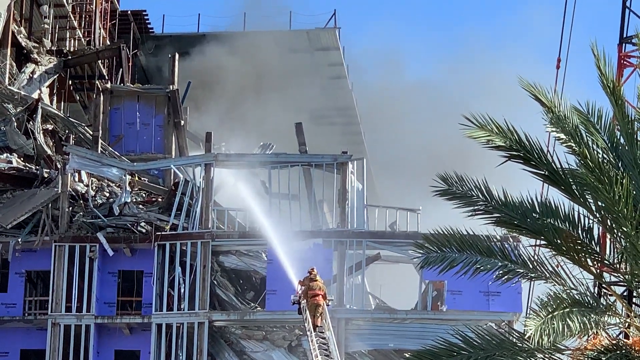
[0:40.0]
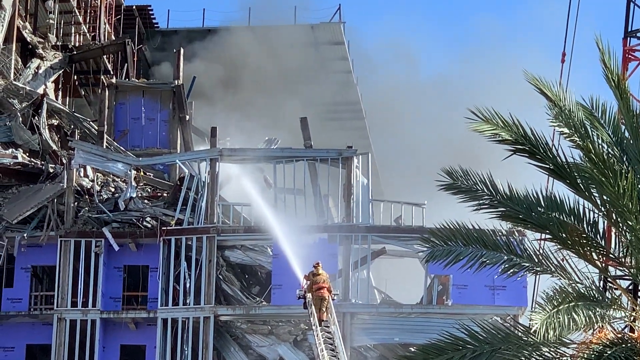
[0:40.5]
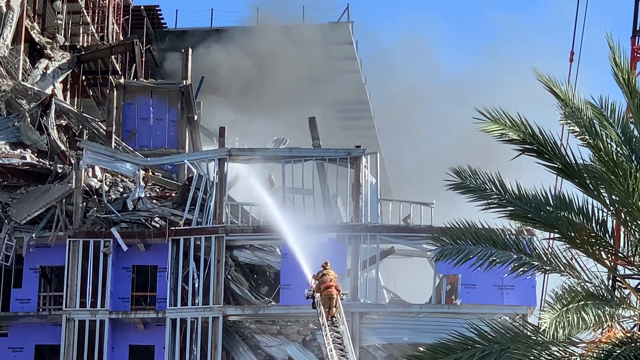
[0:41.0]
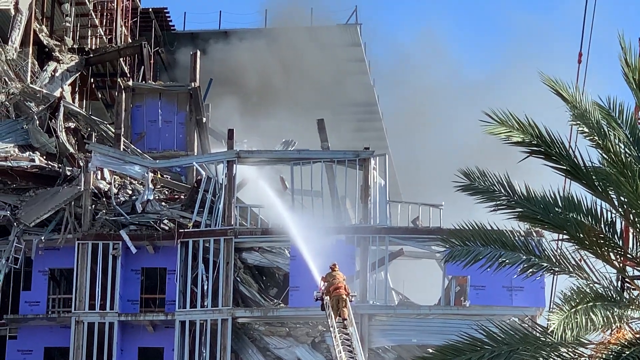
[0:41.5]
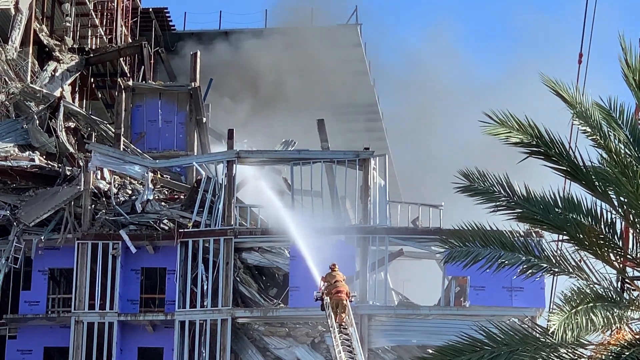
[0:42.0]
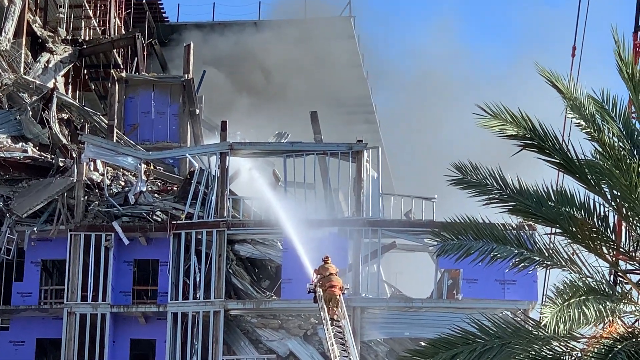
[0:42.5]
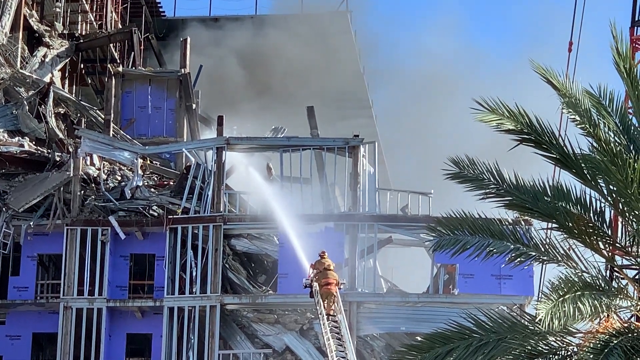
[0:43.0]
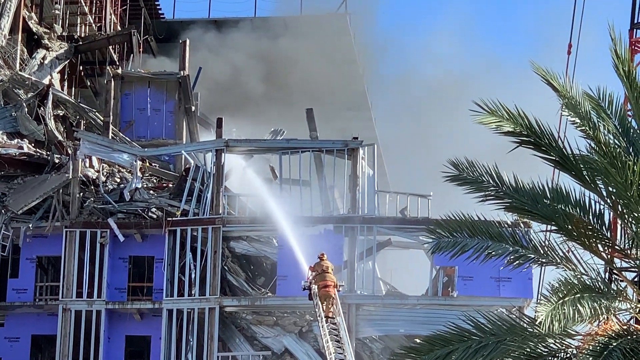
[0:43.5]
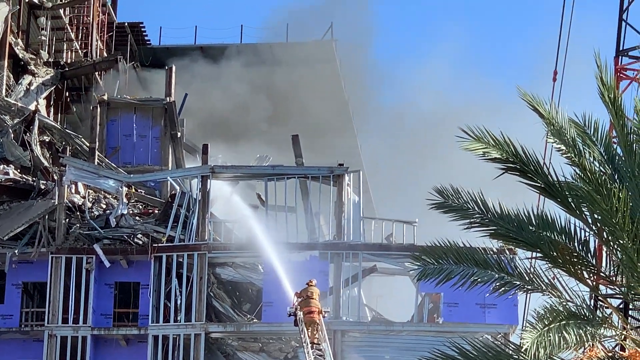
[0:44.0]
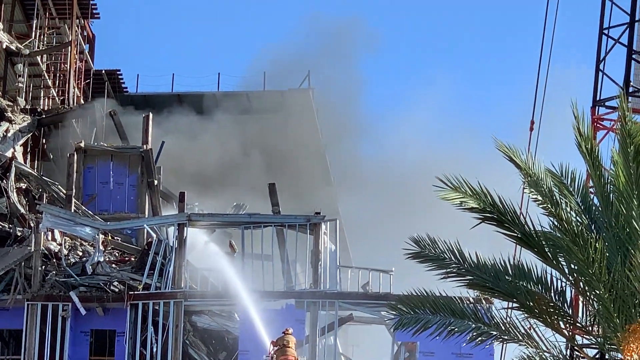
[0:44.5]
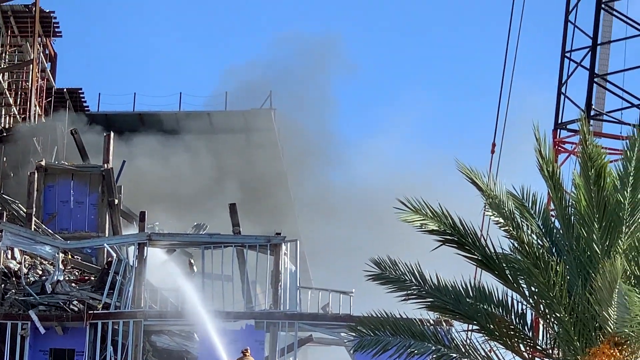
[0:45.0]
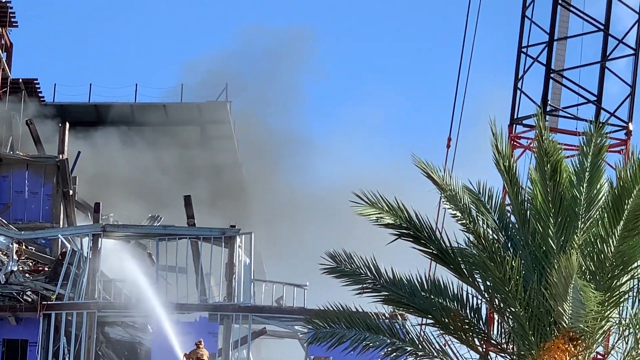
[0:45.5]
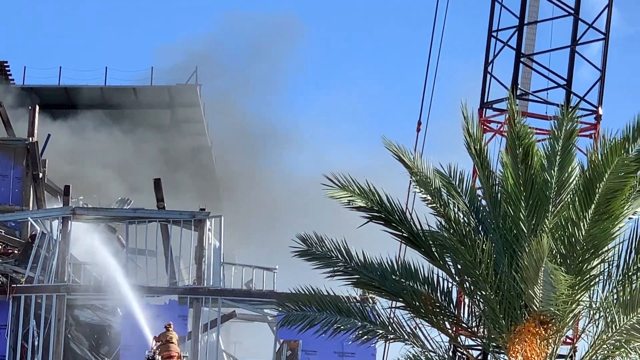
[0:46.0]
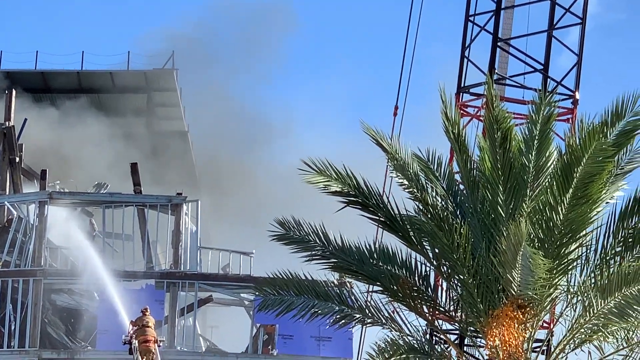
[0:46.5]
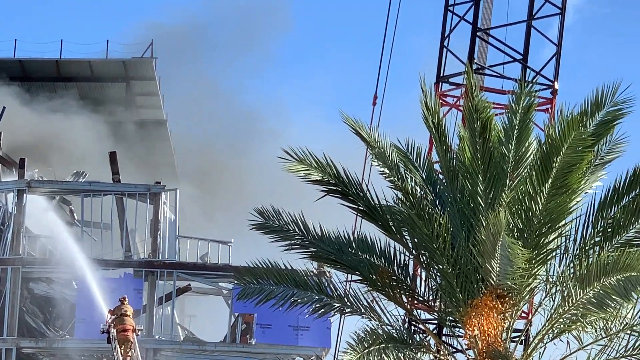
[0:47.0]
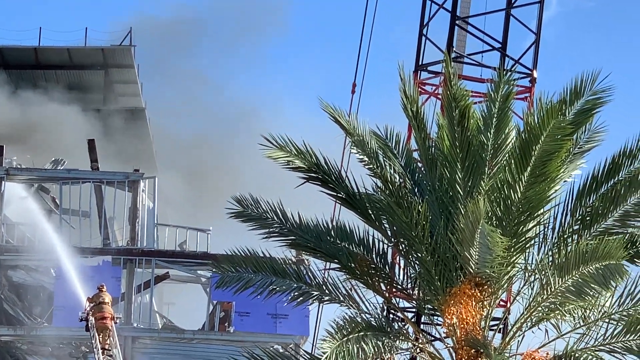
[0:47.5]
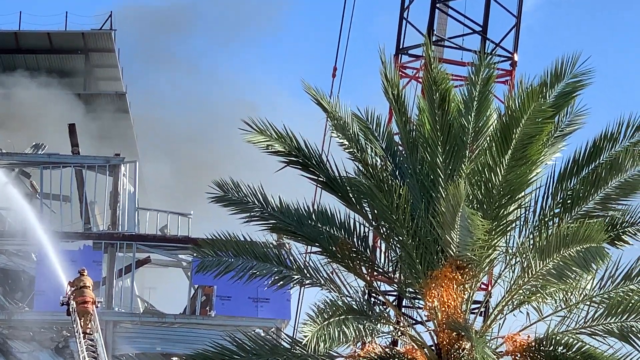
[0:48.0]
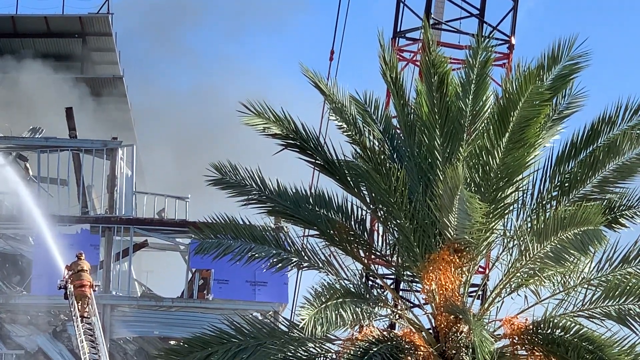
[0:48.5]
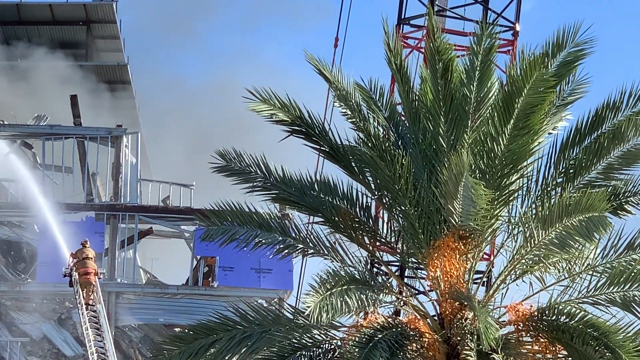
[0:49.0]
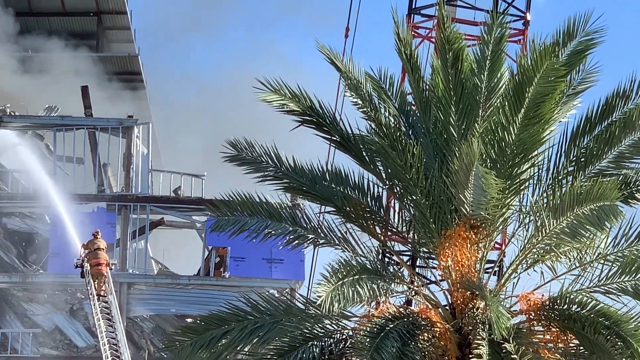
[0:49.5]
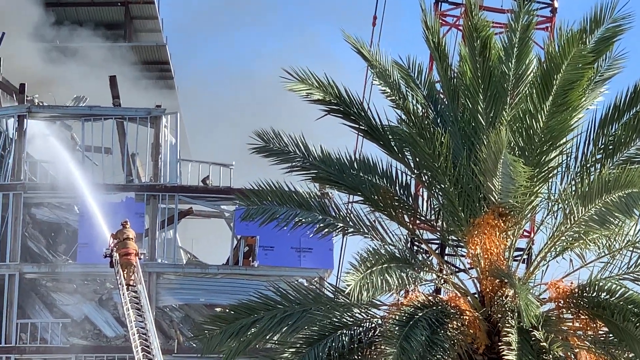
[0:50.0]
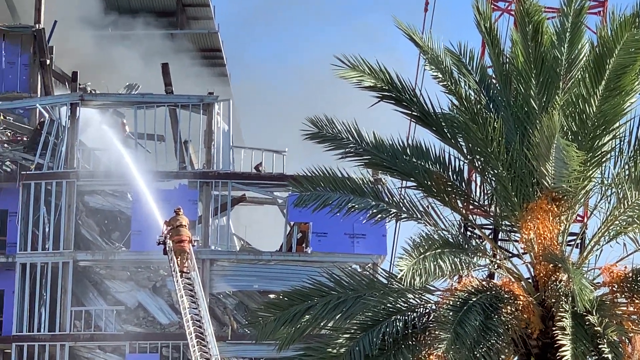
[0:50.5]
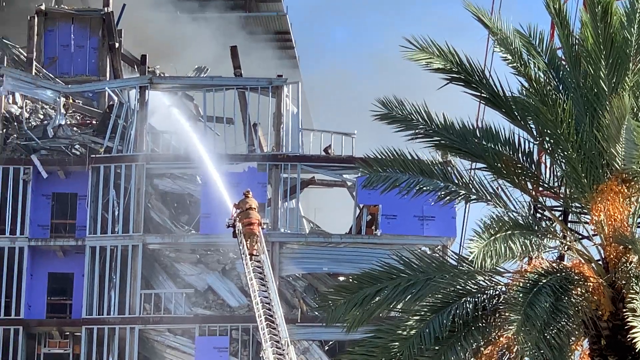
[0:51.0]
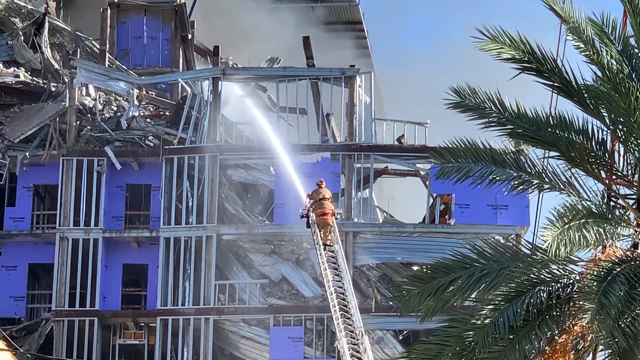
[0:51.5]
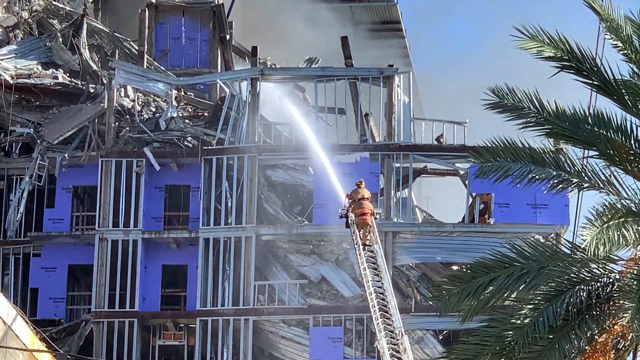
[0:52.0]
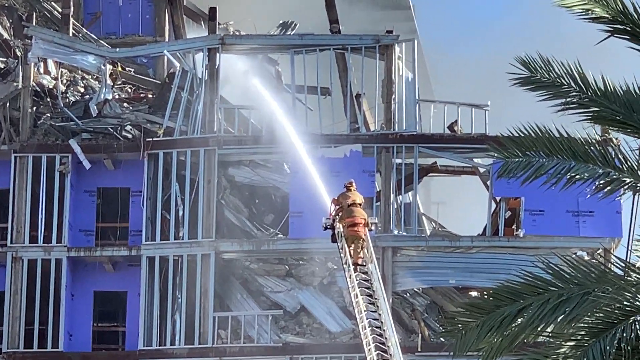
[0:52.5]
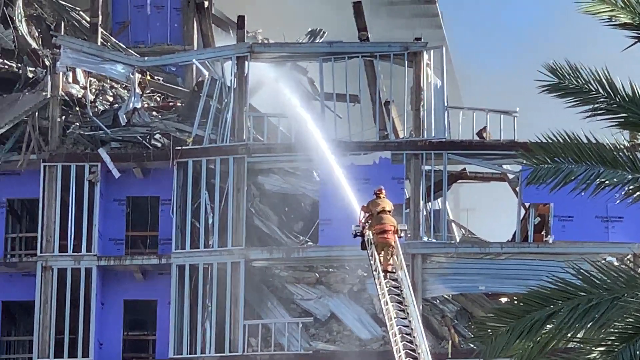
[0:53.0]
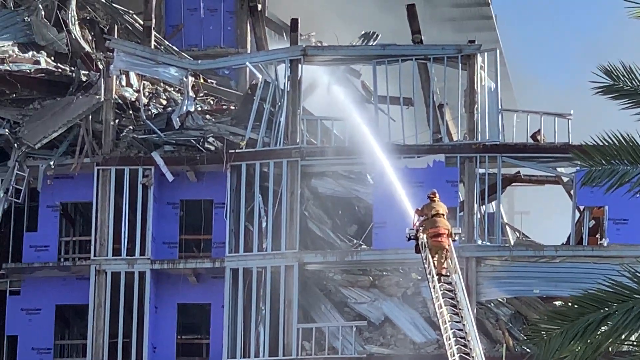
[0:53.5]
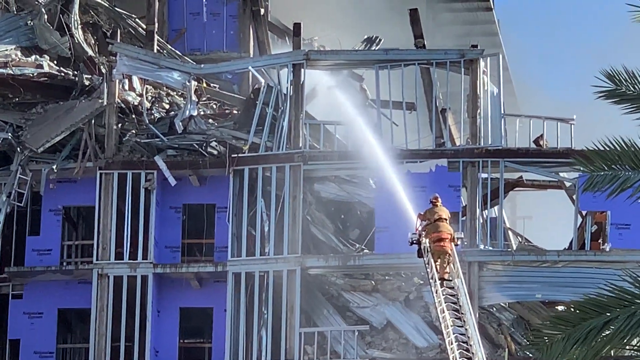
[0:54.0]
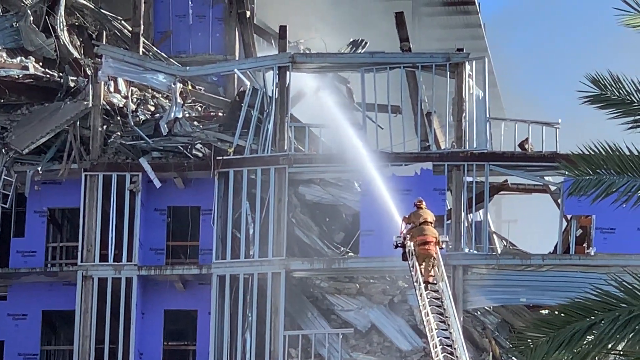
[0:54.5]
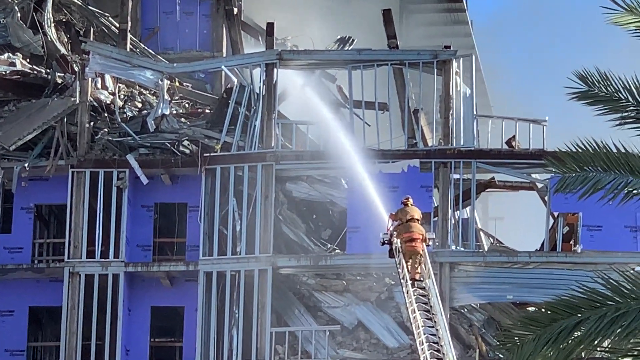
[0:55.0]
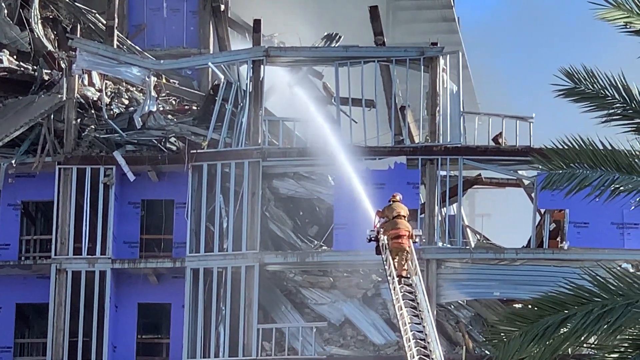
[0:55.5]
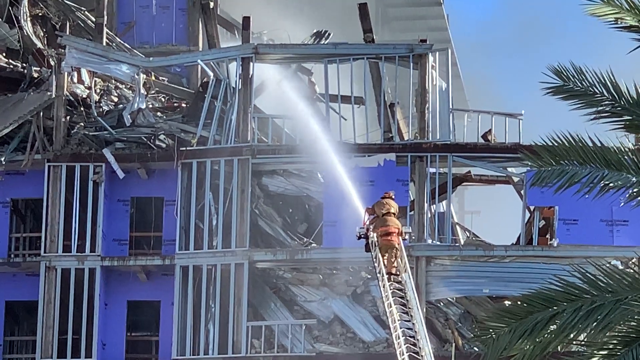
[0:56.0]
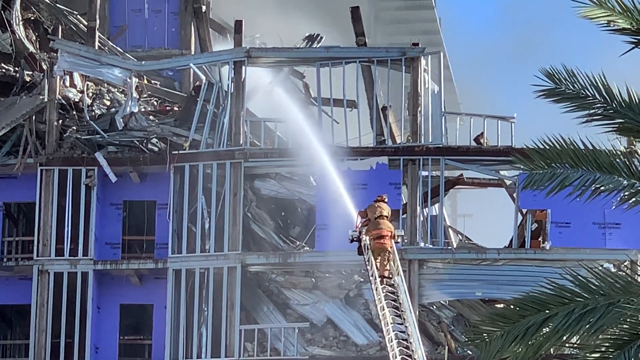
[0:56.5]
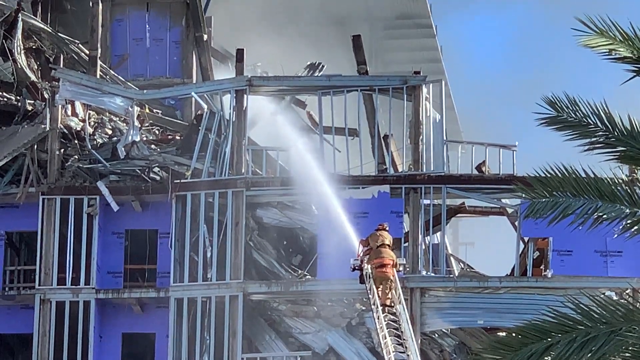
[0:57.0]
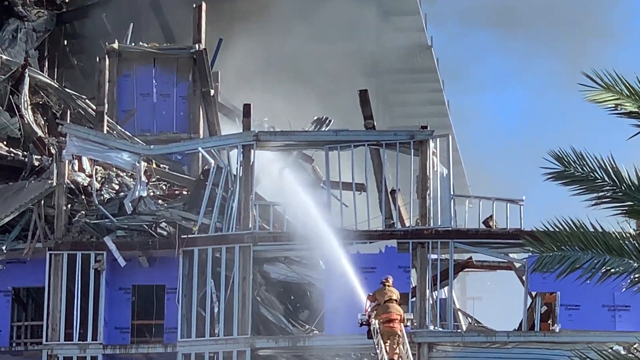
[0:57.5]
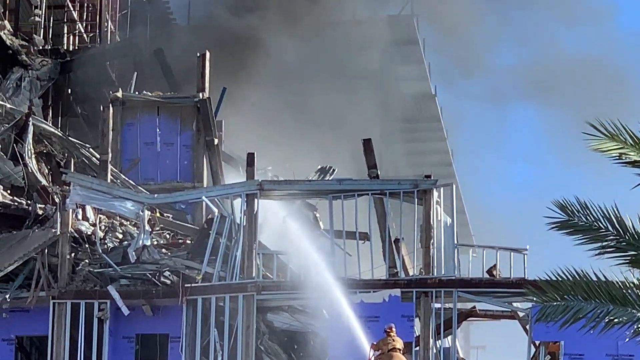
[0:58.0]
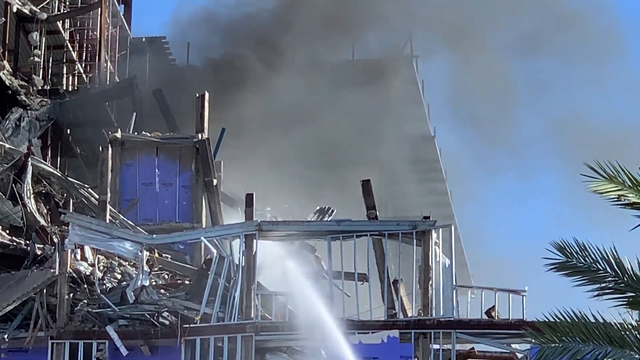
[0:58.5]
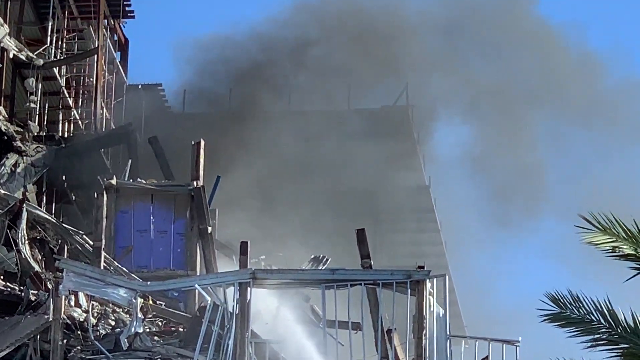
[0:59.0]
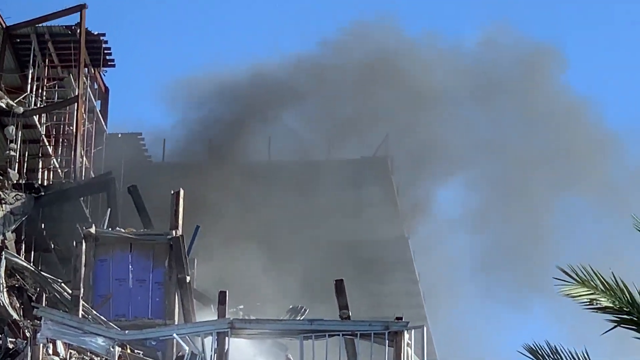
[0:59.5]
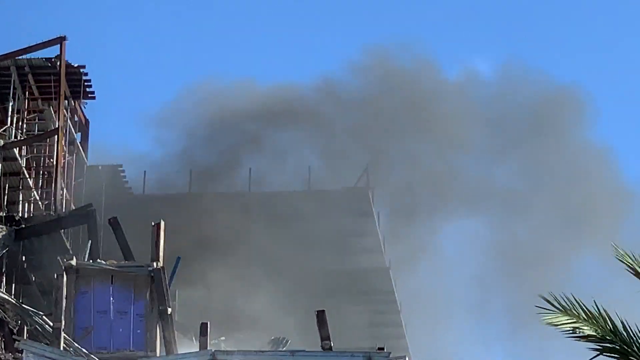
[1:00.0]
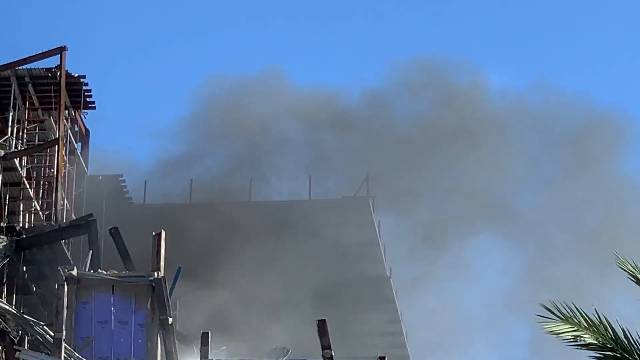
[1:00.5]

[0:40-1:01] The two firefighters stand on top of the aerial ladder, holding onto the hose with a lot of water coming out. The scene shifts to the right, showing the top of a palm tree, and behind it, off in the distance, some sort of large tower that looks like a crane. The view shifts back to the left to the two firefighters on the ladder; they wear firefighting uniforms and helmets and look around as they use the water to put out the fire. No flames are visible, but a lot of smoke comes from the top of the burning section of the building, showing it is burning. The view shifts upward to show the very dark smoke as it moves to the right. In the upper area of the background is a clear blue sky with no clouds.